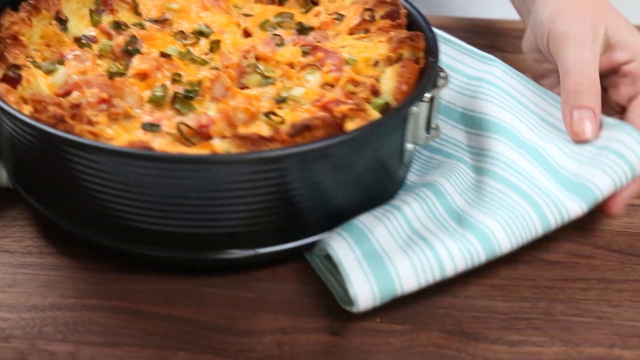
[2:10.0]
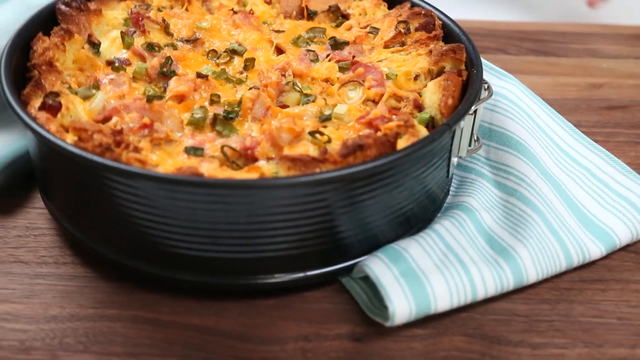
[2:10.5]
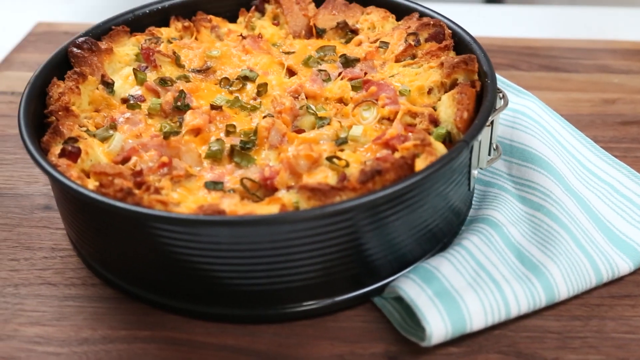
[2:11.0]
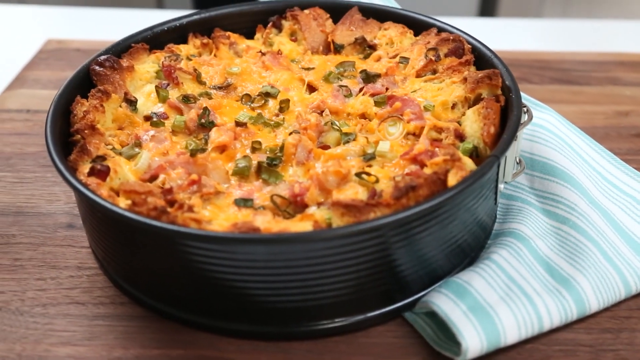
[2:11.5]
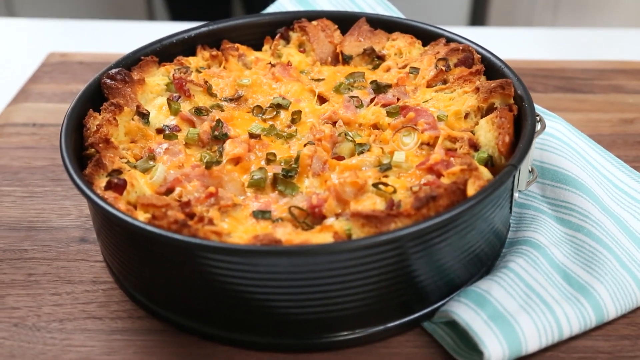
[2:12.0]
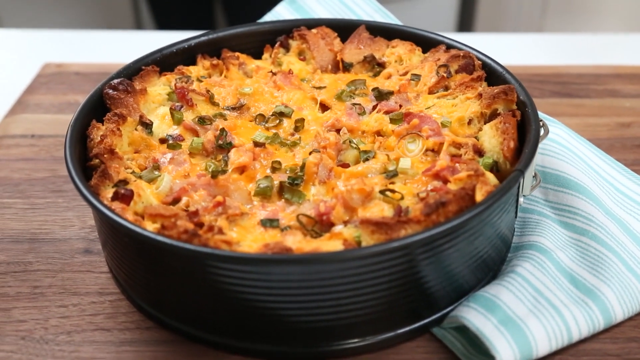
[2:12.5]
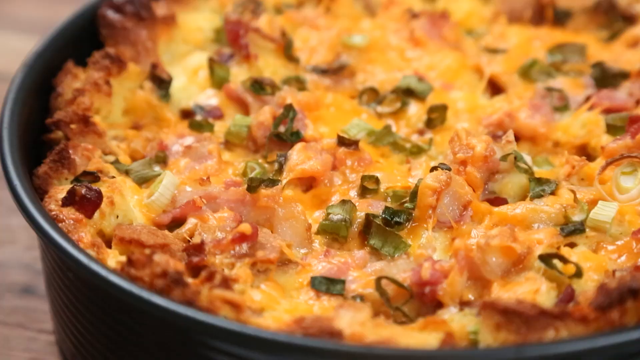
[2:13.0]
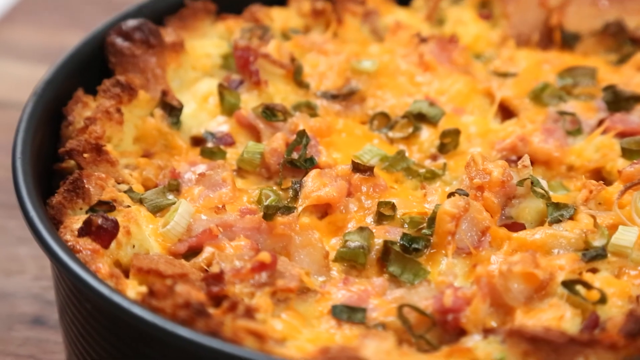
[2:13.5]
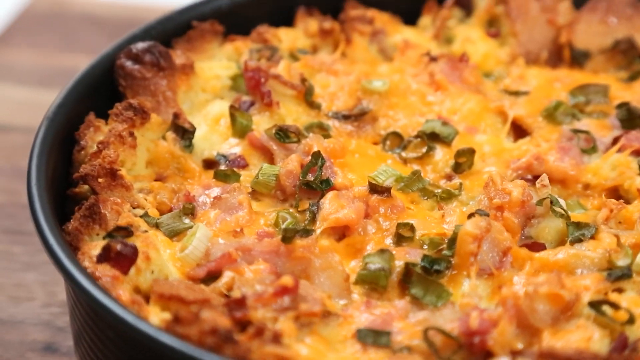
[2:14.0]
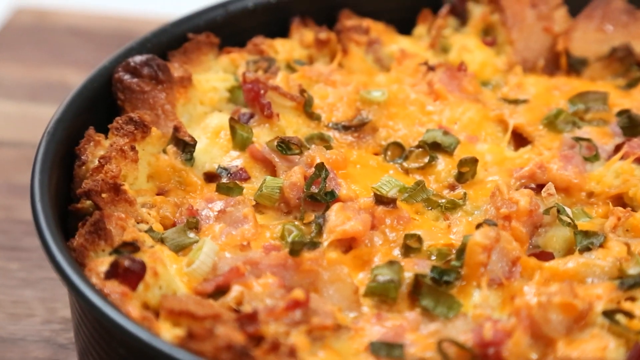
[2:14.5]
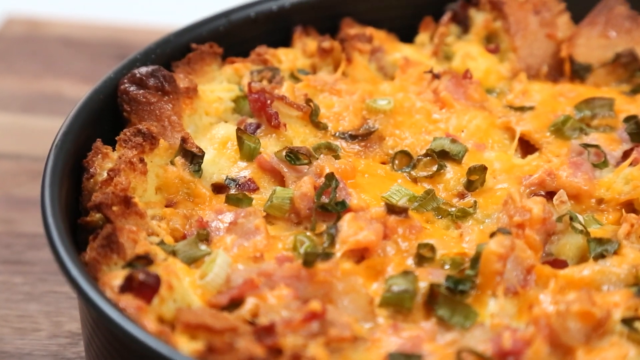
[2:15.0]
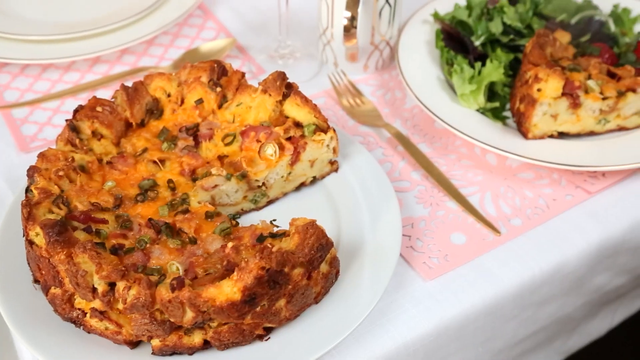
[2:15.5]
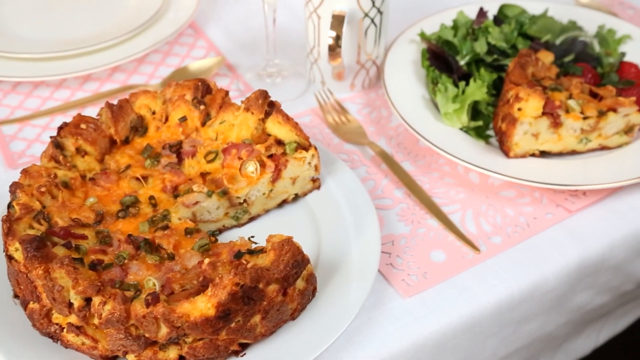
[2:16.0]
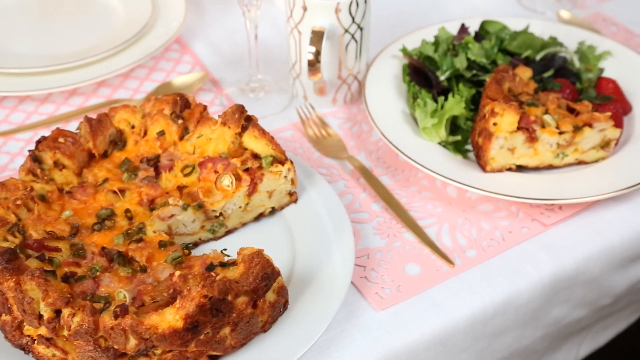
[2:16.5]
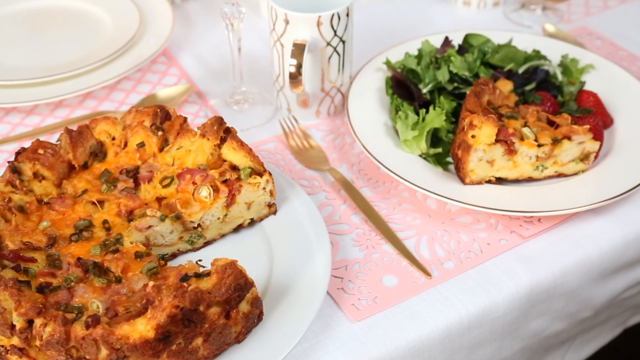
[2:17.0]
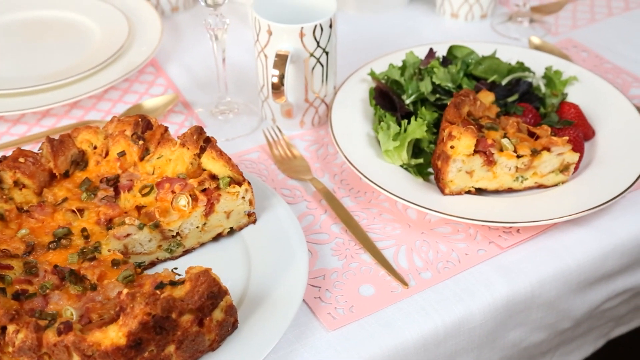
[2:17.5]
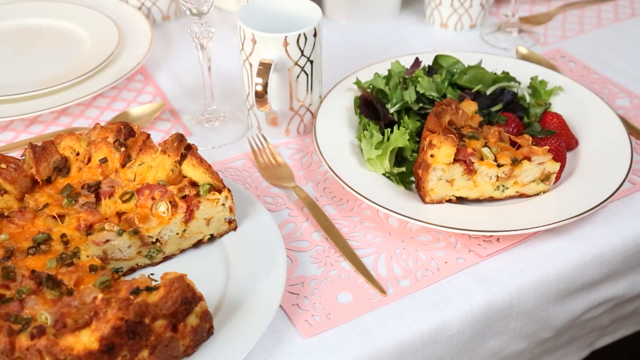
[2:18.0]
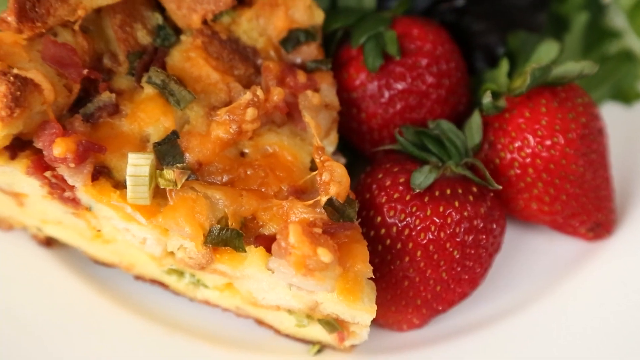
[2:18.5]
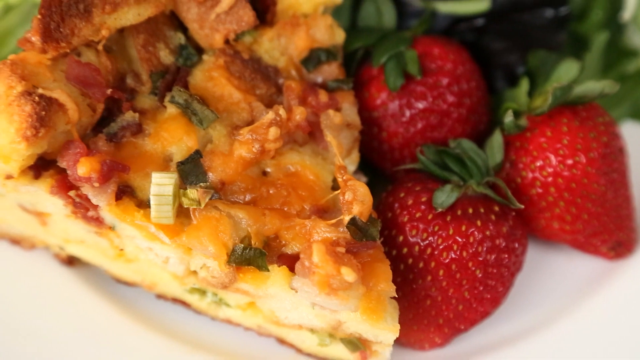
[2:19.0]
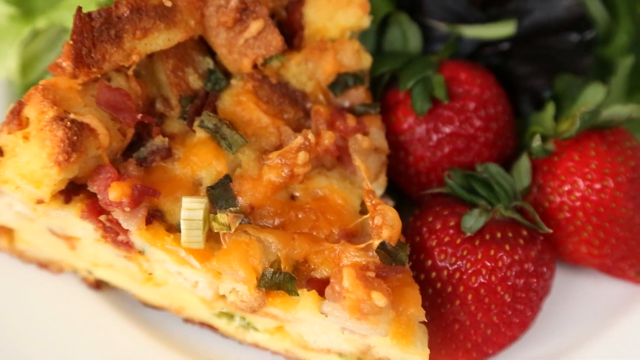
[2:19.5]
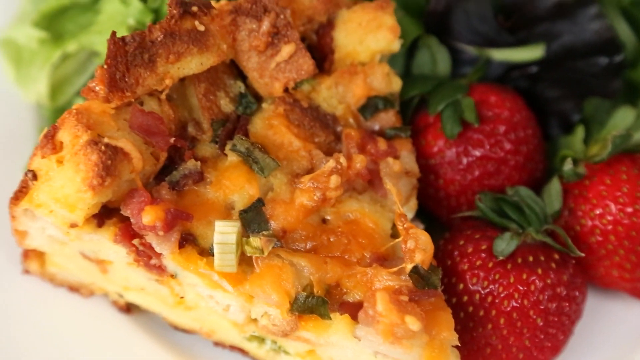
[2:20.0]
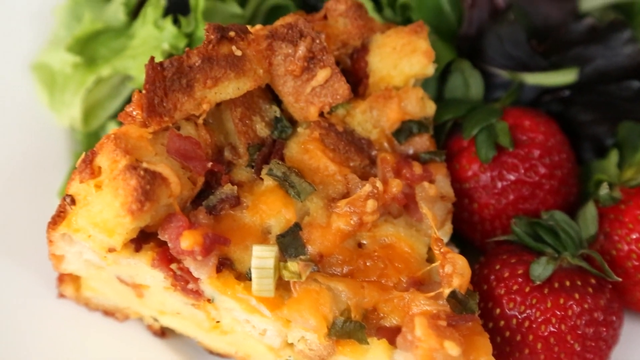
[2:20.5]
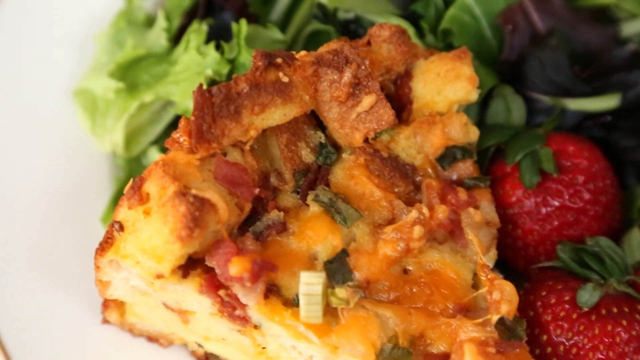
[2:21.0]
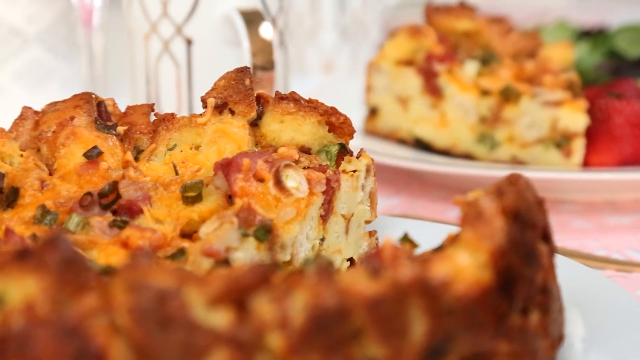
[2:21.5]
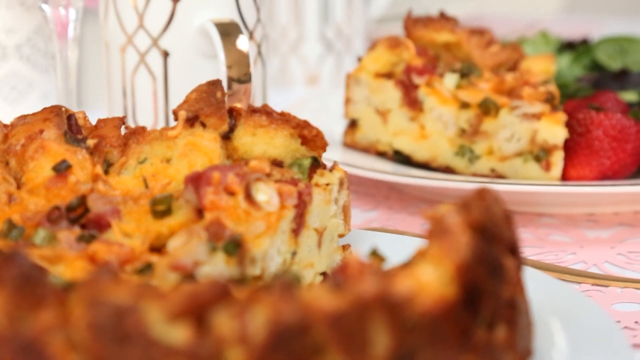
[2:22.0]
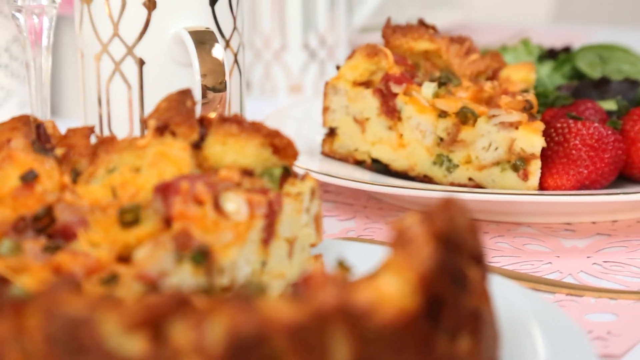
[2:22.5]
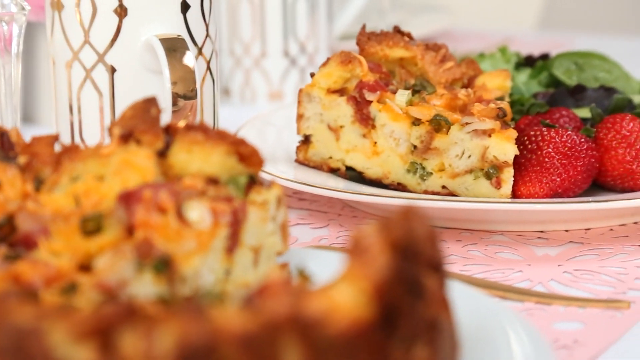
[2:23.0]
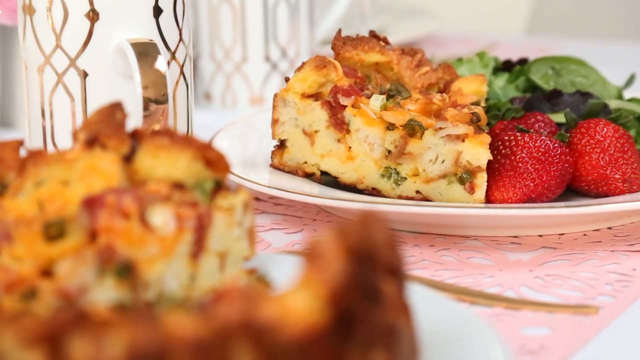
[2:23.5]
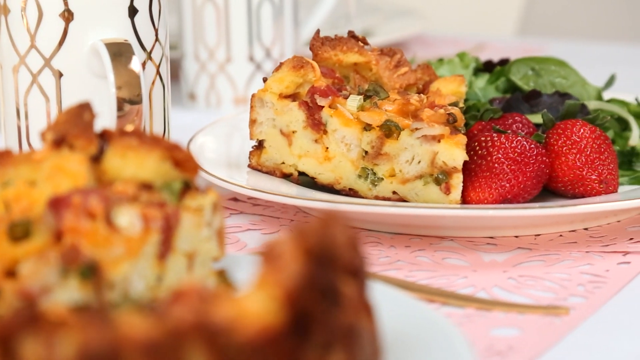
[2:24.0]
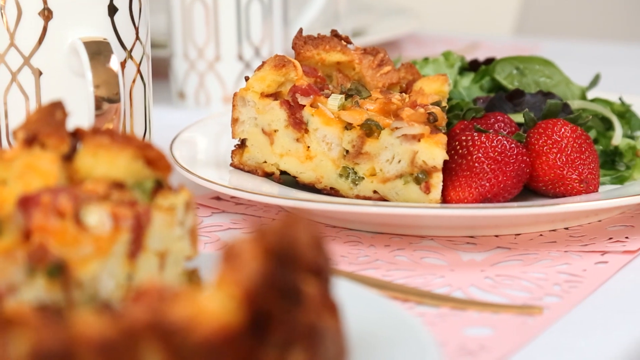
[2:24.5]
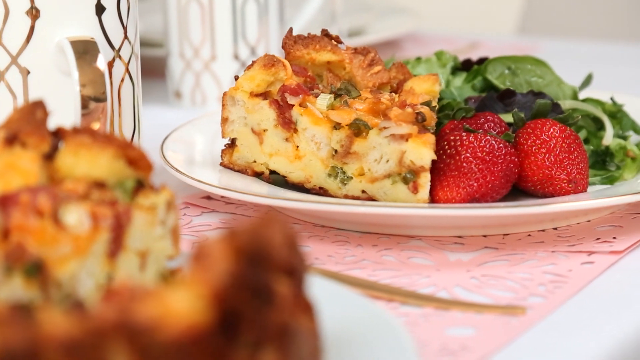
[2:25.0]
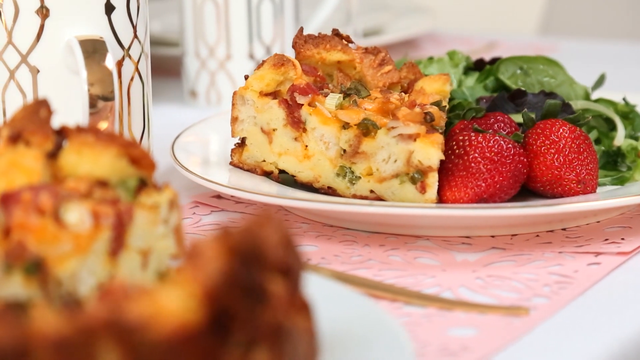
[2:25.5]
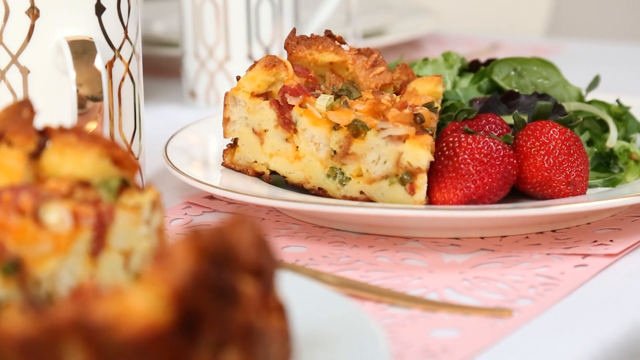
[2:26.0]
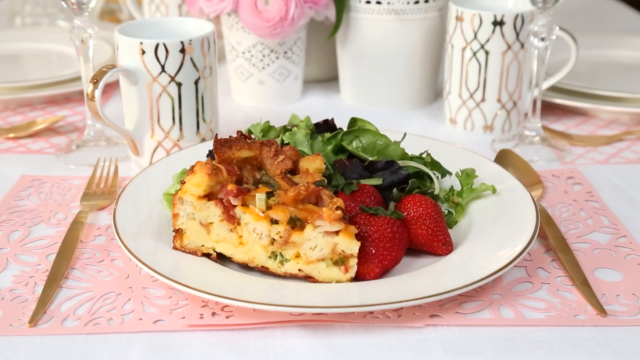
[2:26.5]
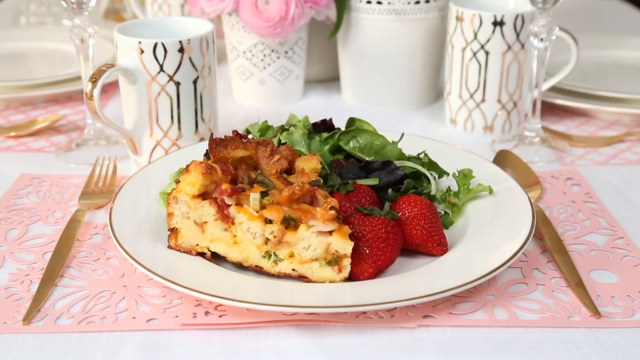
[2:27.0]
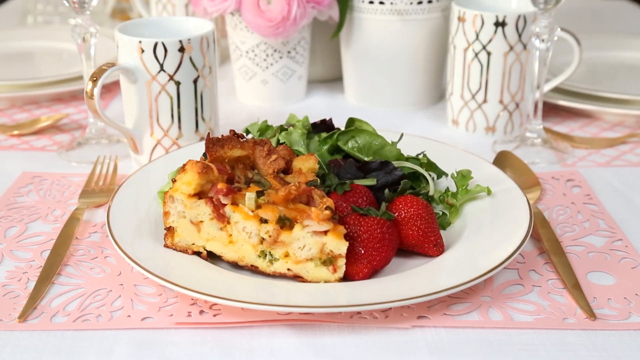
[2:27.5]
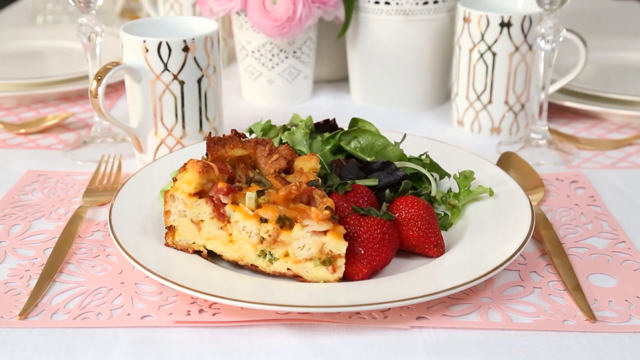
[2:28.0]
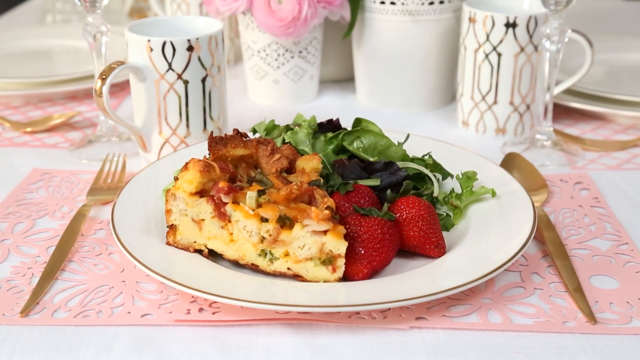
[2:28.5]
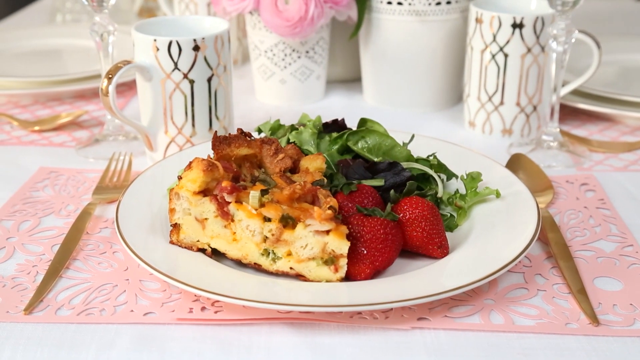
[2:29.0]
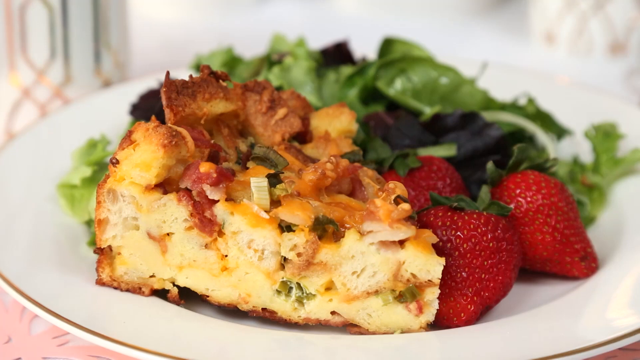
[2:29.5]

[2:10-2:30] The cooked dish is taken out of the oven in a black, circular baking pan; its edges are a brown, crispy color, and bacon on top is kind of melted in with the cheese. A close-up shows the textures and colors of the baked item, kind of like a bread-style quiche with crispy edges. It is then on a white plate with one slice taken out, showing an inside that looks kind of soft and fluffy, maybe a little crispy on top and on the edges. The plate also holds a salad and two or three strawberries next to the quiche-style dish. A close-up shows the single slice on the plate, then the view zooms out from a different angle to kind of an overhead of the whole quiche-style dish, with the single slice, strawberries and salad on the plate in the background. A direct shot of the plate shows a gold fork and a gold spoon; the fork is to the left of the plate.